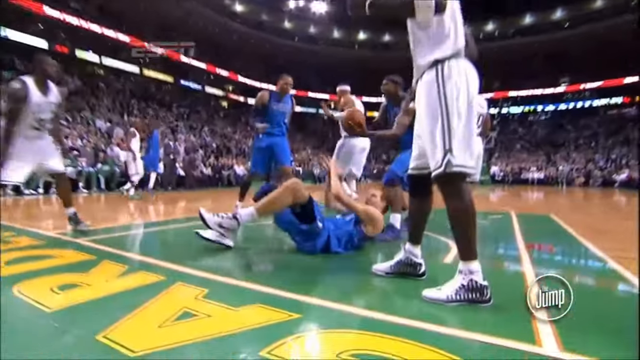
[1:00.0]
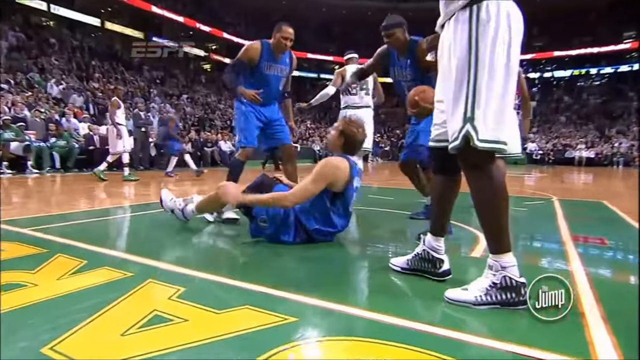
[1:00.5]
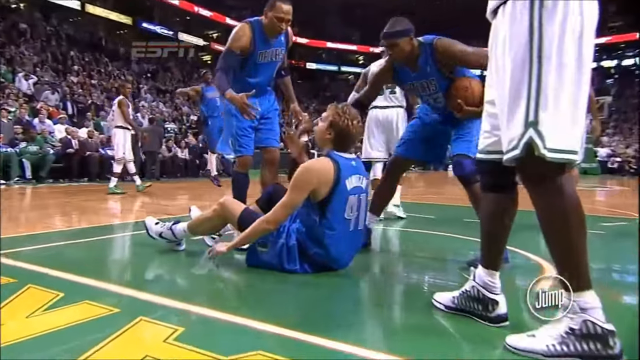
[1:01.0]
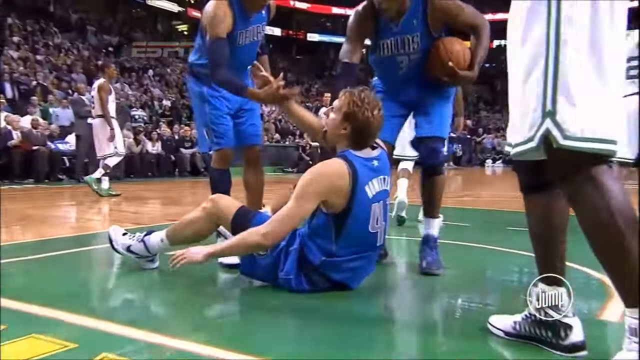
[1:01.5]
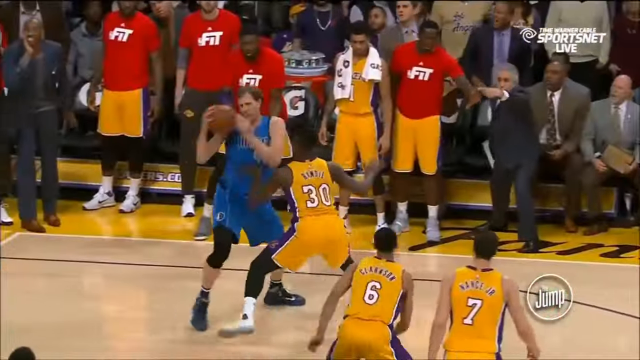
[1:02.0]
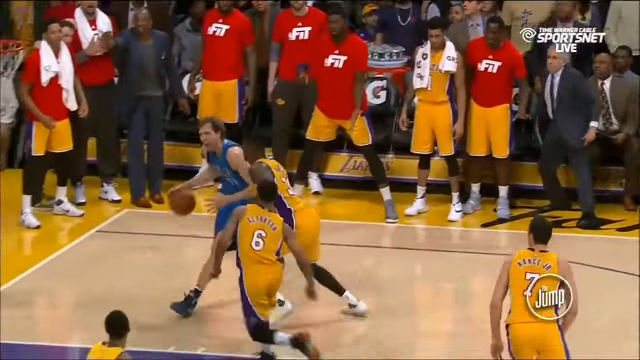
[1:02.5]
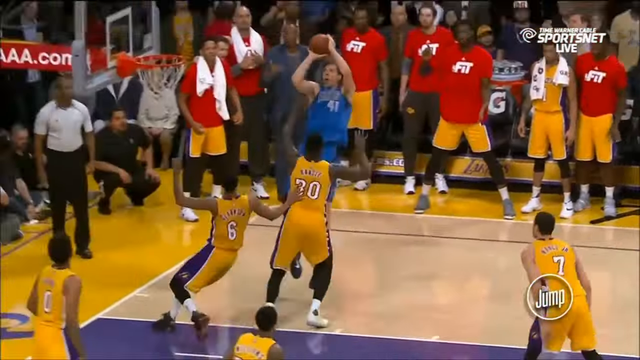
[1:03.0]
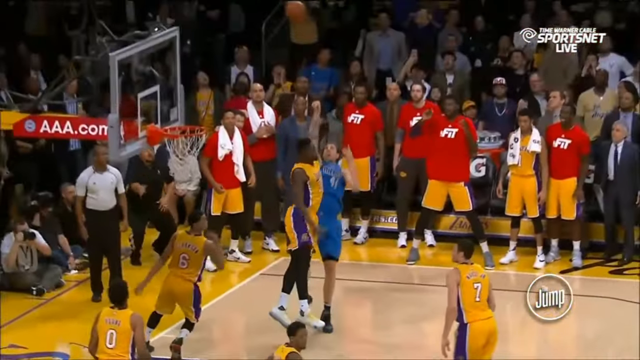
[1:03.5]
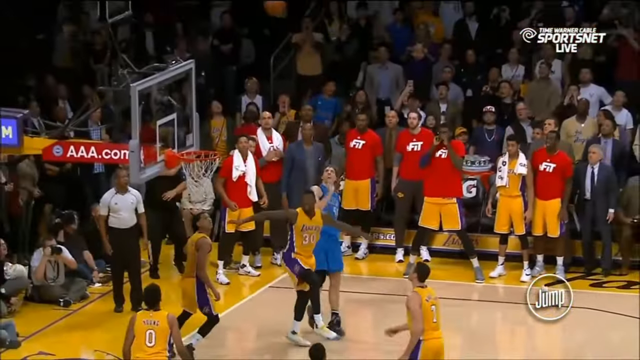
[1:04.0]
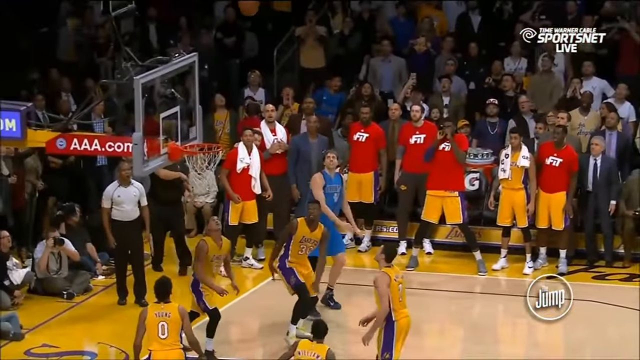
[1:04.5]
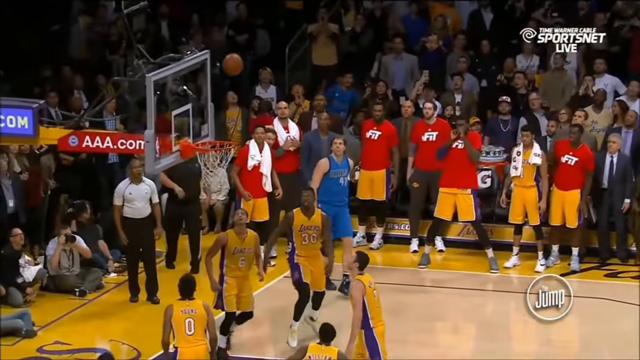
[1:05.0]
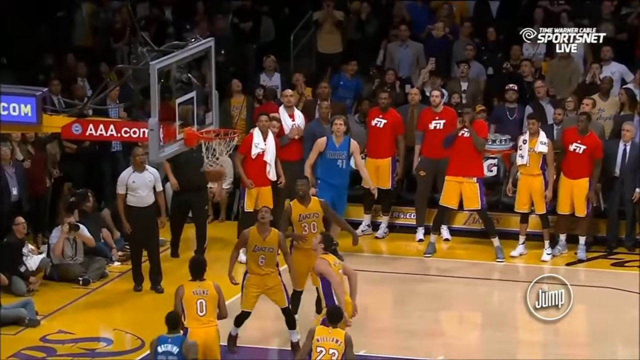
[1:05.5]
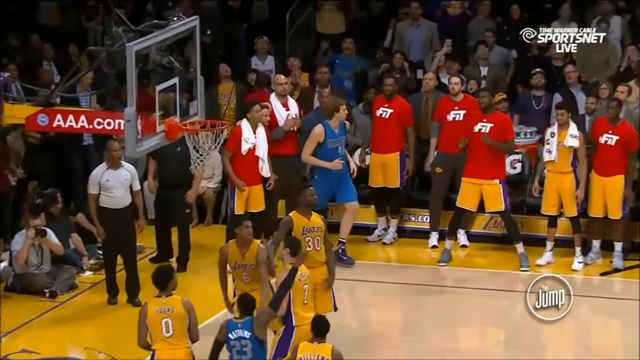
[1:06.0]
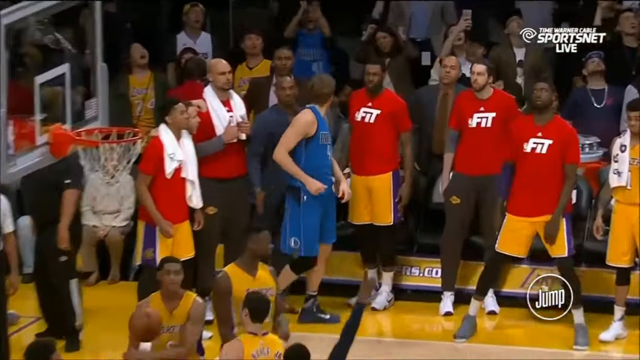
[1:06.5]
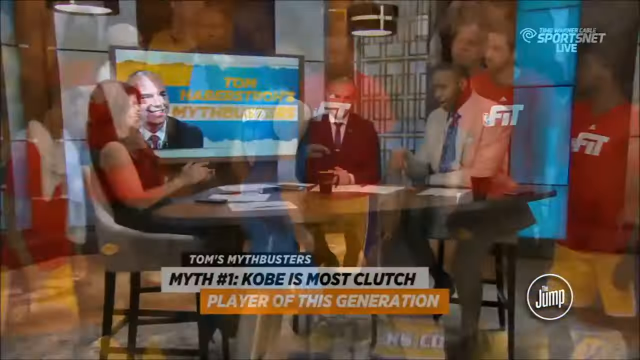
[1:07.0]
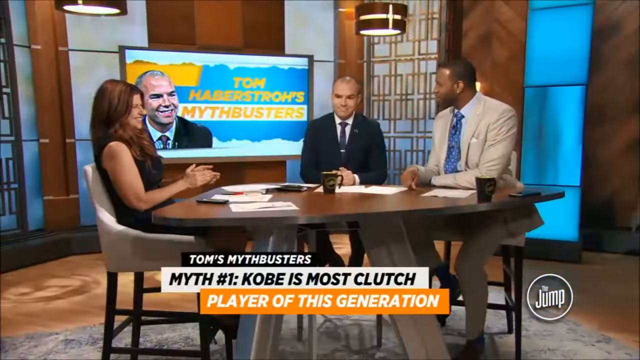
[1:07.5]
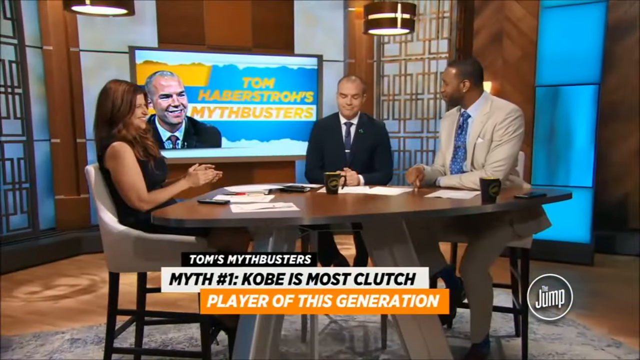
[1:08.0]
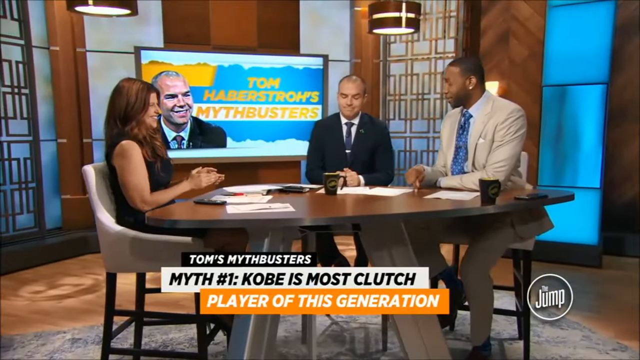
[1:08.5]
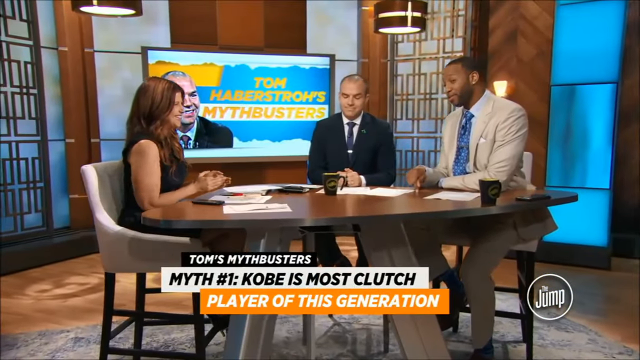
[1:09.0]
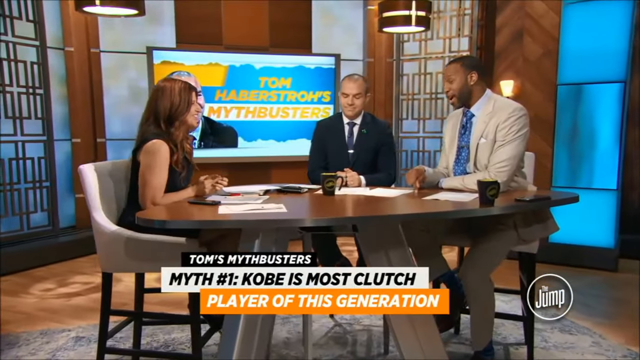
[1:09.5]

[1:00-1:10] Fouled, he is shoved down and sits on the paint. He wears white shoes, possibly Nike, with white socks coming halfway up, and black compression shorts show as his long blue shorts pull back from the fall. One player, cradling the ball with his left arm, reaches to help him up, and both players try to help him; another teammate pulls him up by grabbing his hand. Next Dirk Nowitzki has the ball, guarded by number 30 of the Lakers, with Dirk Nowitzki holding quite a height advantage. A coach on the right side points, and there are players in red jerseys. Dirk Nowitzki takes a fadeaway shot; number 30 seems a little too late. Dirk Nowitzki makes the shot and turns to the opposing team with a look. The video returns to the round table, where the woman on the left is laughing, and the man in the khaki suit laughs a little and talks, apparently looking toward the other man.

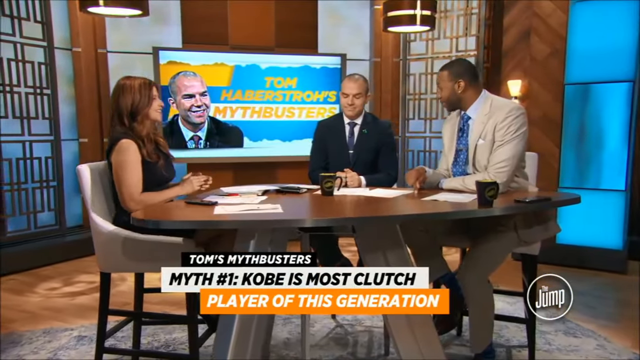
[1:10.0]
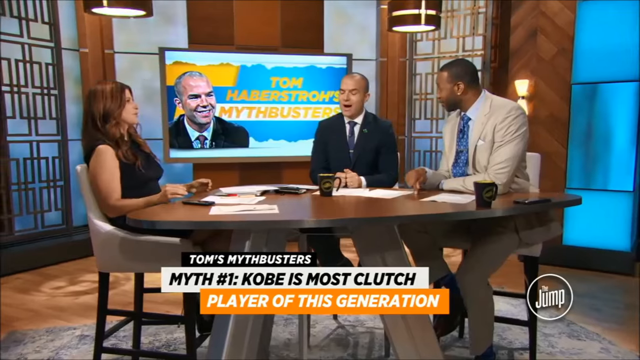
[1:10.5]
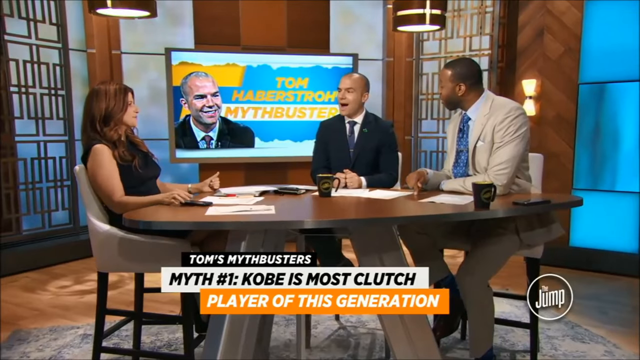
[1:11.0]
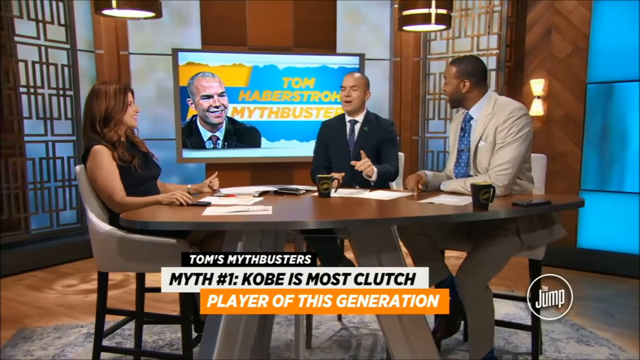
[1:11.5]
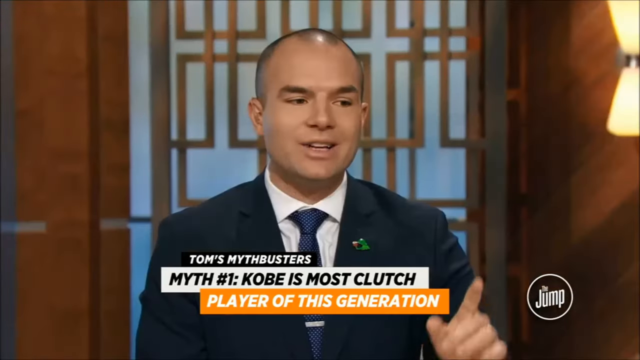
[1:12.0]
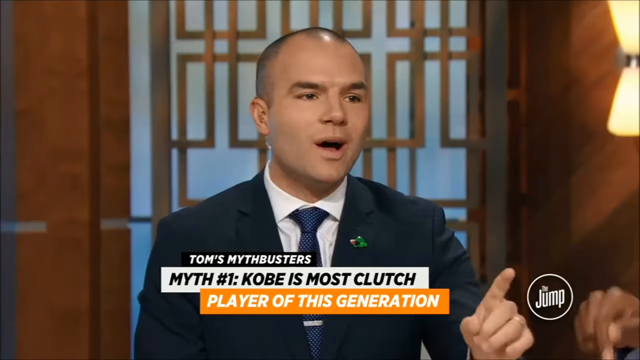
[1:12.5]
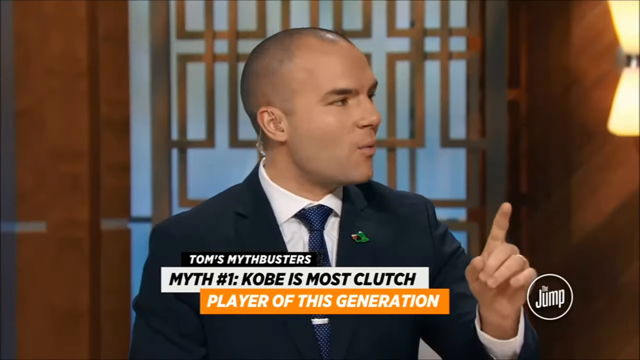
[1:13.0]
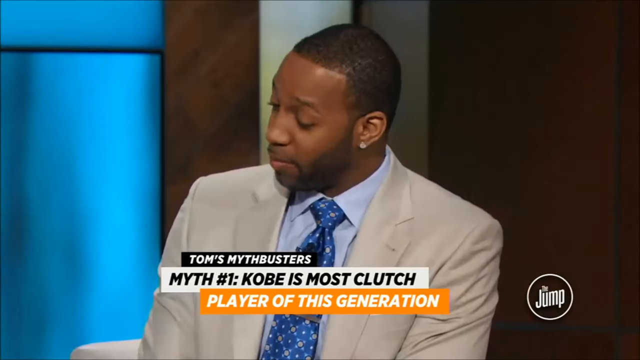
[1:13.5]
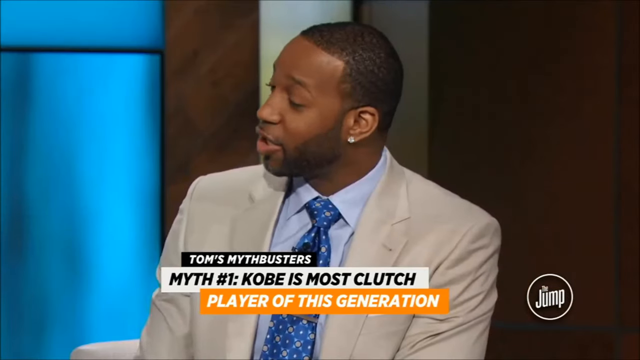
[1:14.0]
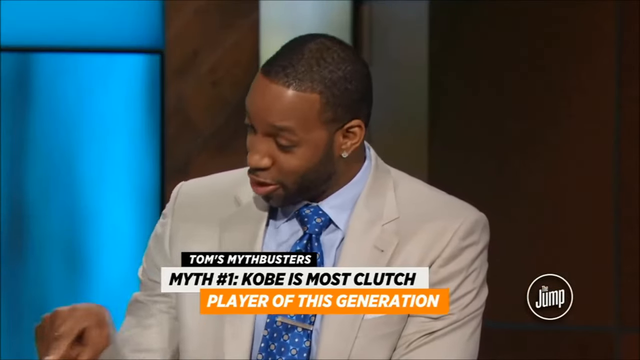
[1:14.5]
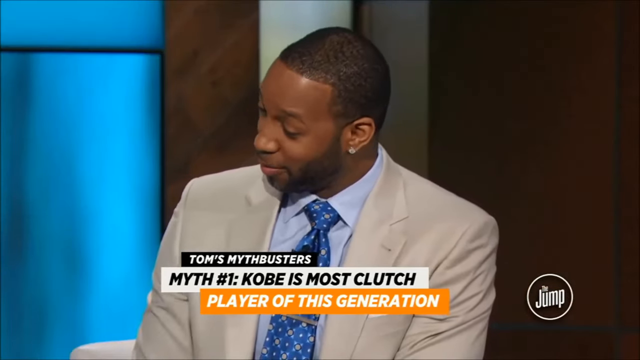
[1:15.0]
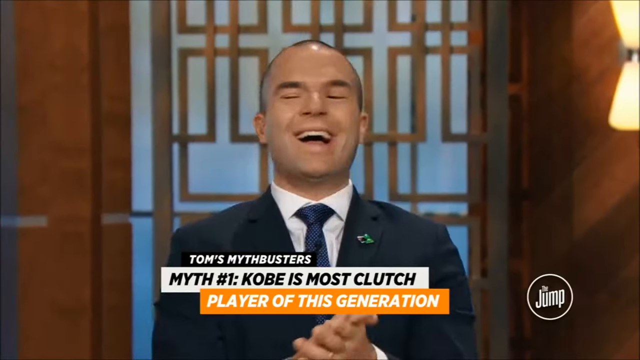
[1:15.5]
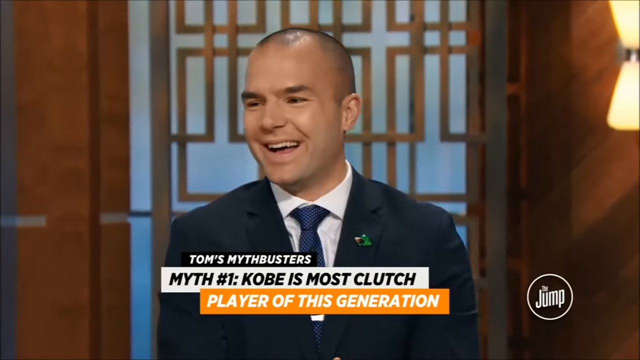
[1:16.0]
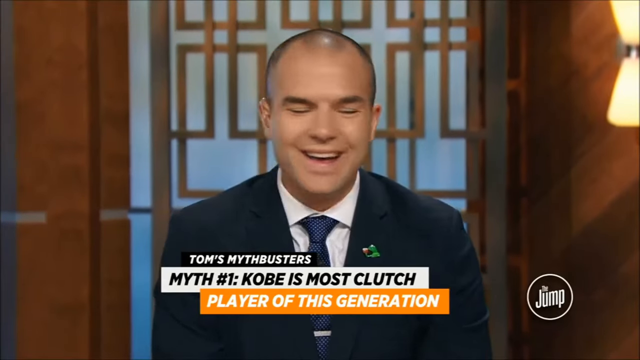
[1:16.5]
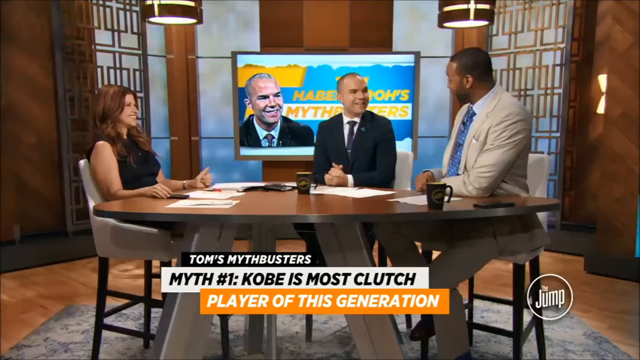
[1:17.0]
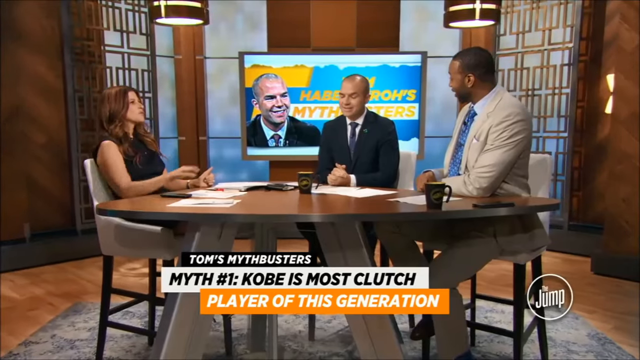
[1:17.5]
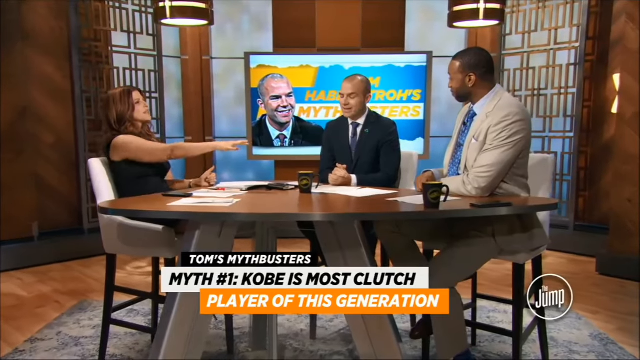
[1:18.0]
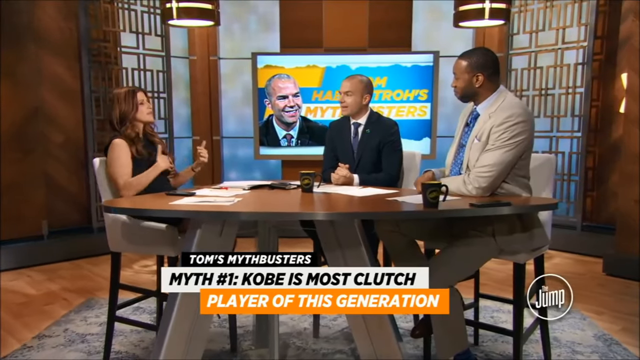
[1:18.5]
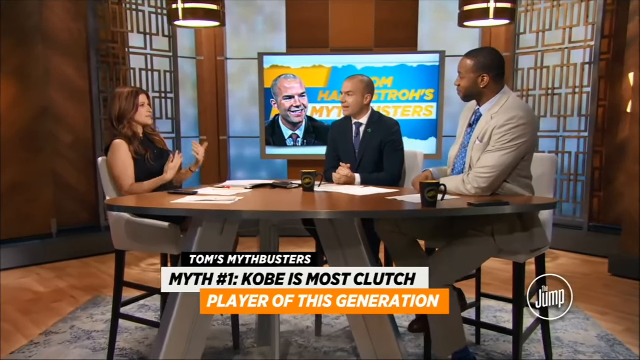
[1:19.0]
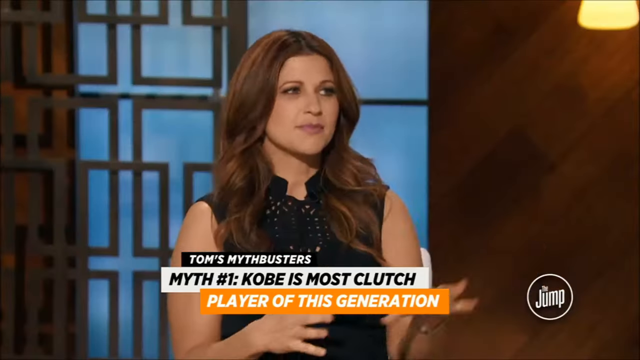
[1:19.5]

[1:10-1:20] The man in the middle starts to talk while the other two listen; he has his fists together. The woman leans back a little, listening and interjecting, and seems to have her hand slightly on the phone. The shot cuts to the man in the middle, who wears a green lapel pin or something similar and a blue and black checkered tie, with a little of an earpiece visible below his right earlobe. He tilts and looks toward the Black man to his left, pointing at him a little. The view moves to the Black man, who tilts down looking at him; he wears a similar blue tie. The man in the middle starts laughing at whatever the Black man said. The camera zooms out, and the two men listen while the woman talks, making a circular motion with her hands as she speaks and gestures. She also wears a necklace. The man in the middle's lips move as he talks, and there appears to be friendly banter between them, especially between the two men.